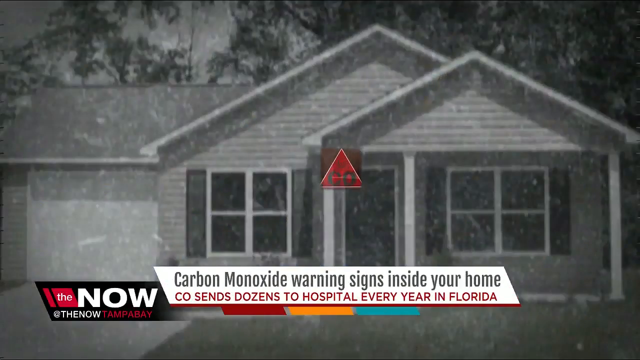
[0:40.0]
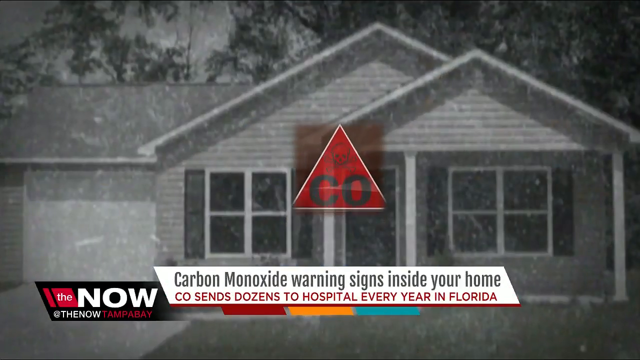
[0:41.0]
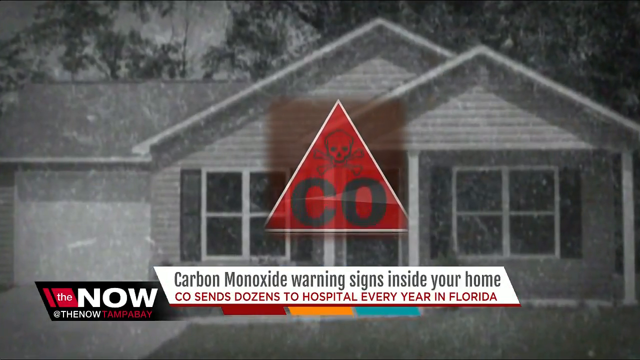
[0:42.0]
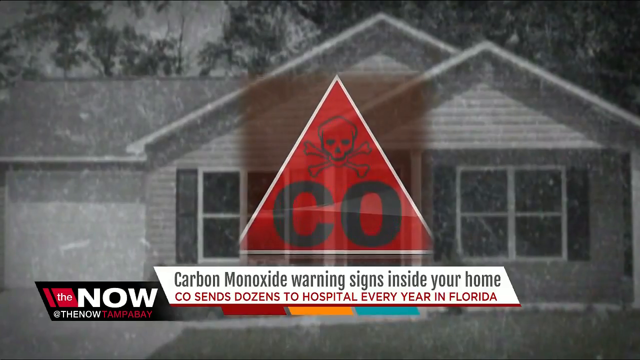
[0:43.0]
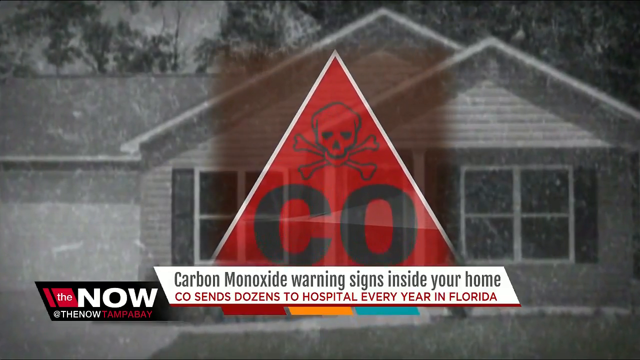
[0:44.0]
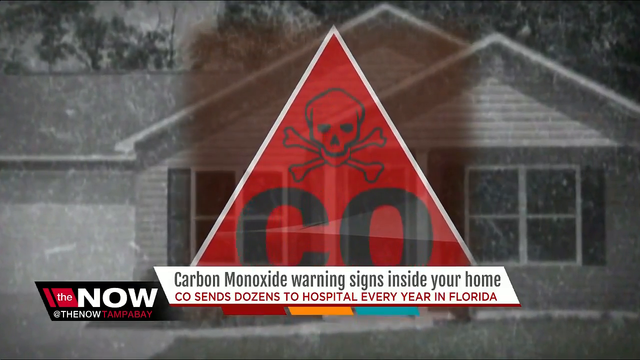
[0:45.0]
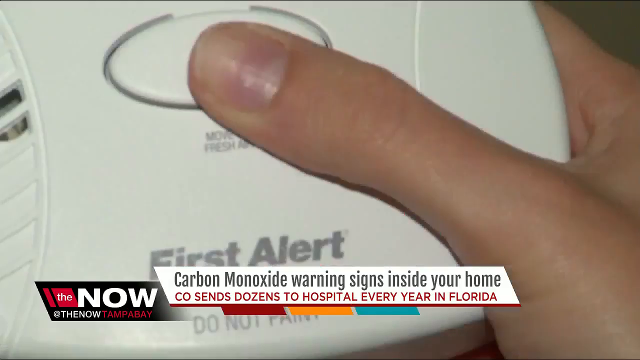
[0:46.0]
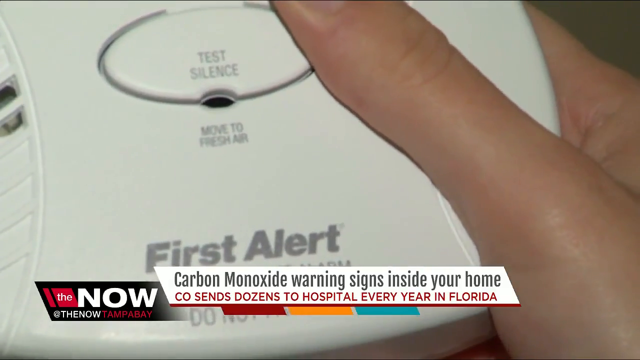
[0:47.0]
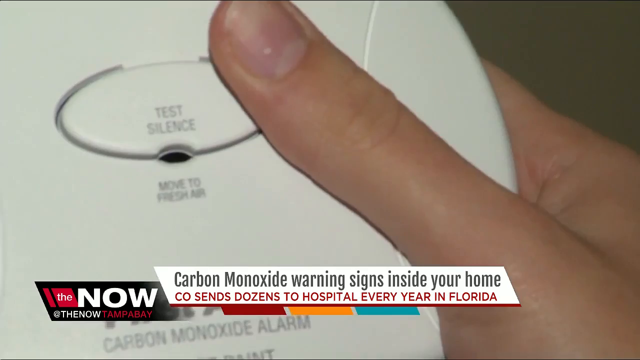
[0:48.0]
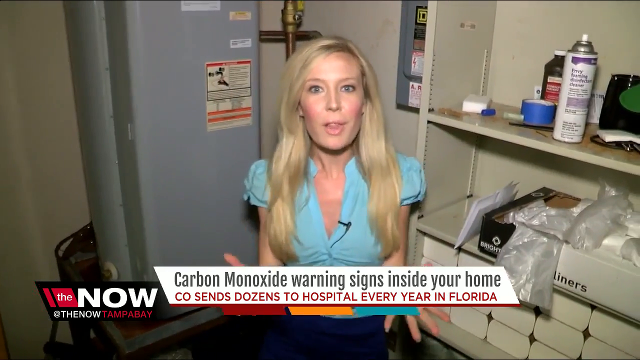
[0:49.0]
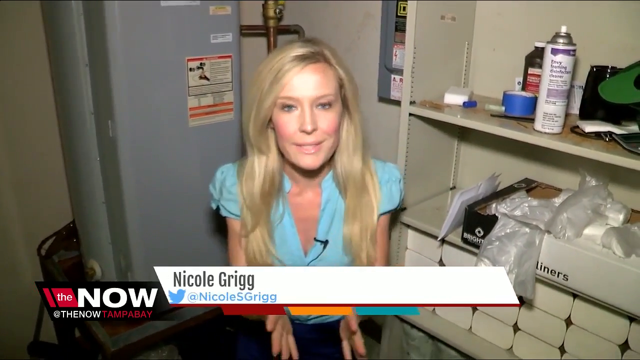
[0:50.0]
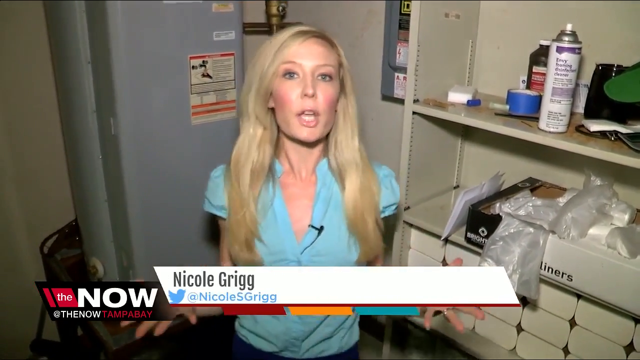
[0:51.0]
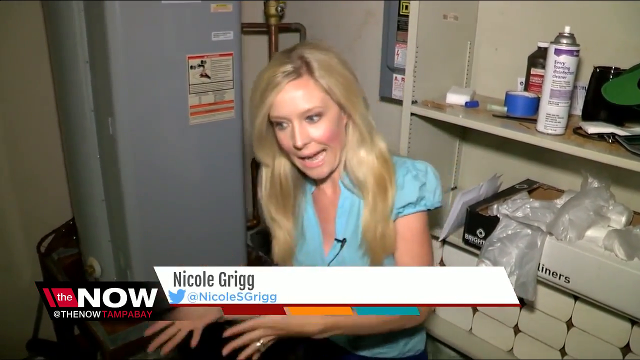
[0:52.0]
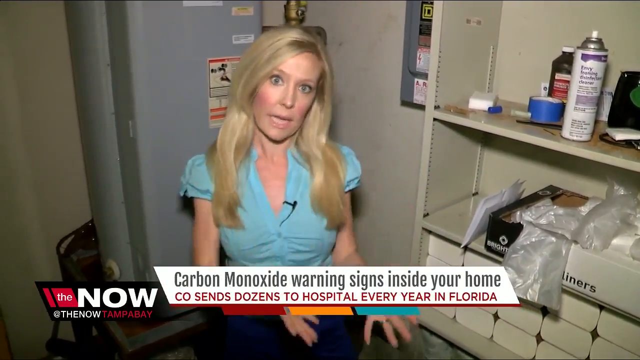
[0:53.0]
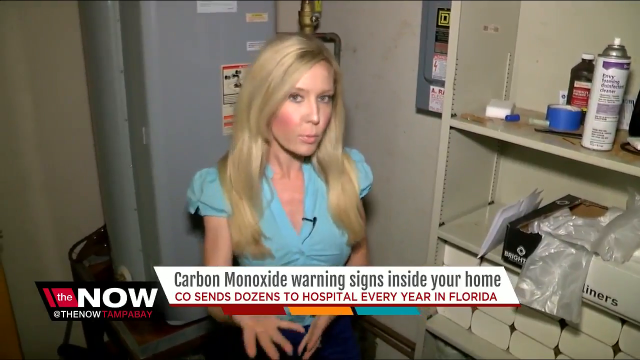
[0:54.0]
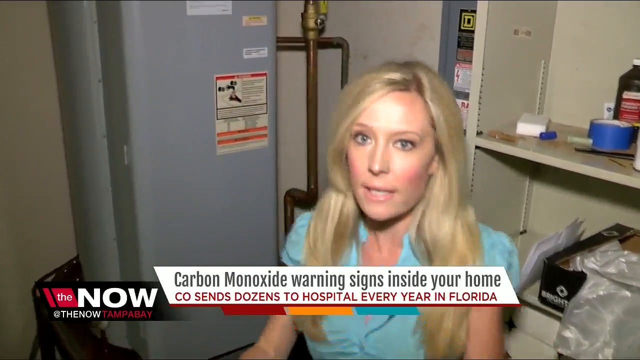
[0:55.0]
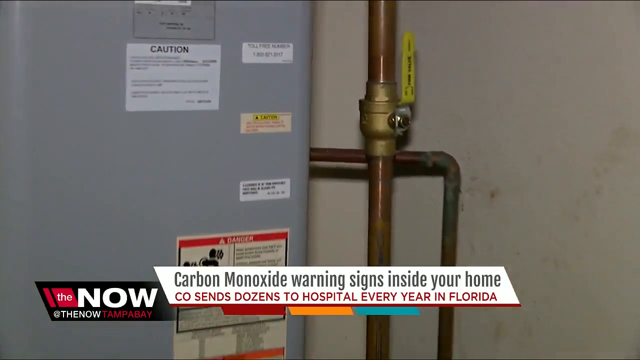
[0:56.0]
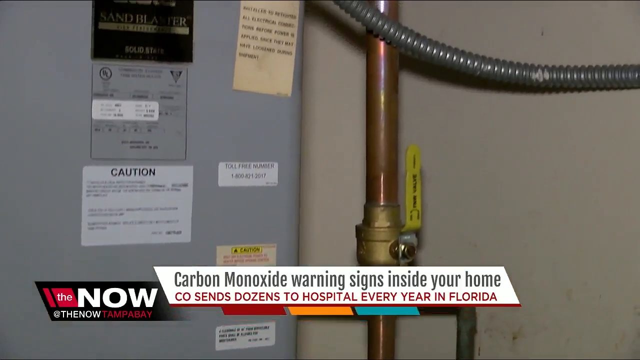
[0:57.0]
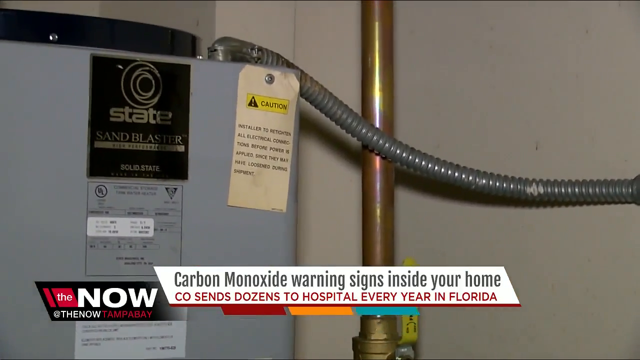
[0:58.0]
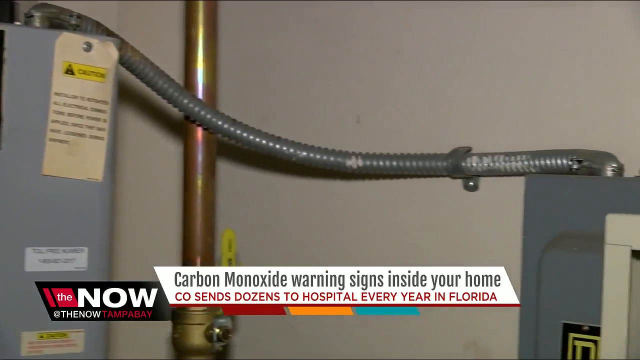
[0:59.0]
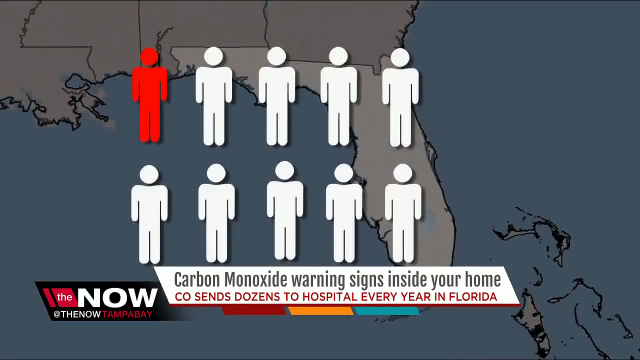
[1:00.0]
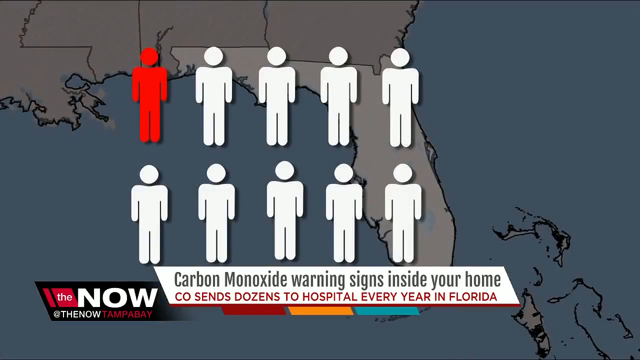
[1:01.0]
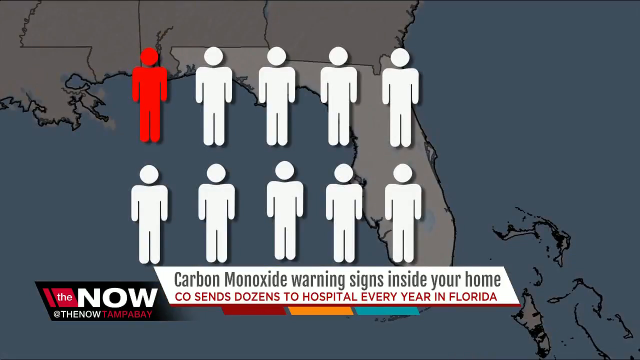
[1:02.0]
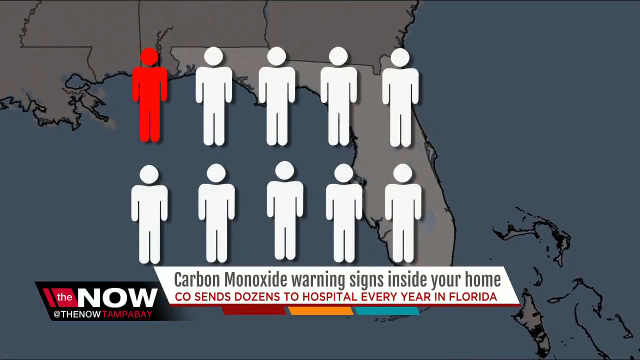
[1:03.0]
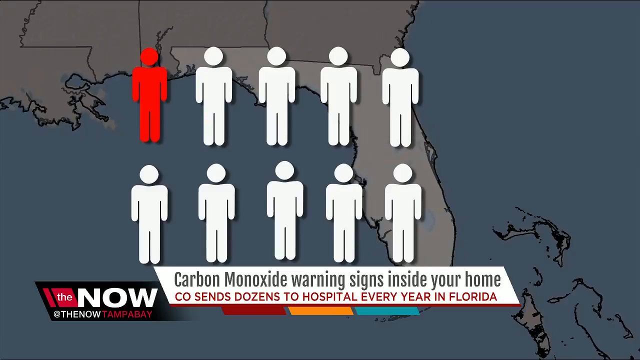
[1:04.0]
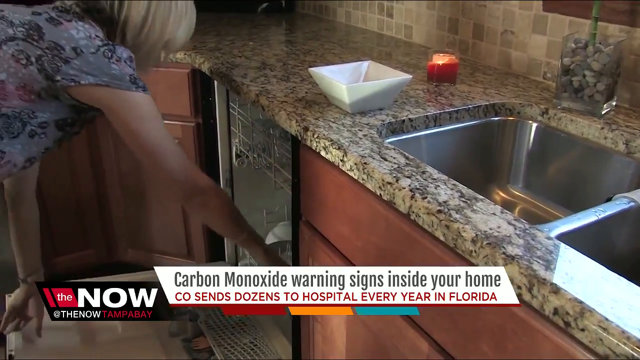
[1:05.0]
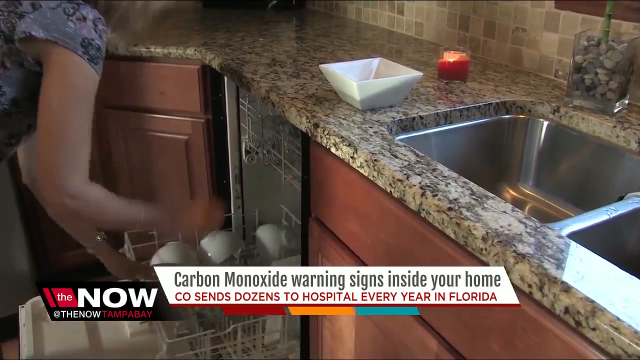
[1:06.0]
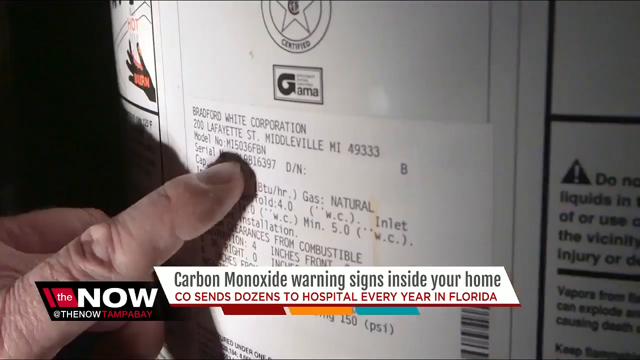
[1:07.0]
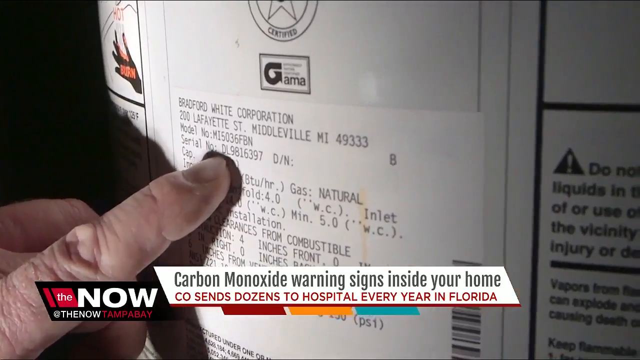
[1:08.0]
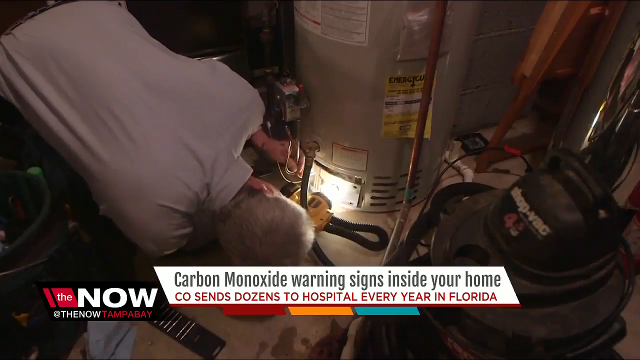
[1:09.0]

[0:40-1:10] A gray image of a house with windows in the front and a triangular roof is shown. In the middle is a triangle with red inside, a skull and crossbones at the top, and dark black lettering reading "CO". A white banner underneath reads in black lettering "carbon monoxide warning signs inside your home", with red lettering below reading "CO sends dozens to hospital every year in Florida". On the left is the black banner with a red box holding the white word "the", "now" in white beside it, "at the now" below, and "Tampa Bay" in red. The image in the center of the triangle gets larger. Next, a white person's hand on the right side holds a white device with black lettering at the top reading "test silence" on a button, then "move to fresh air" below, and "first alert" and "carbon monoxide alarm" below that. The next scene shows a white woman with blonde hair in a teal sleeveless top. Behind her on the left is a grayish tank, and to her right are beige metal shelves holding a white and purple spray can and a roll of blue tape; a gray fuse box is just behind her. The white banner beneath her has changed and now reads in dark gray lettering "Nicole Gregg", with the X logo under the blue bird and "at Nicole S. Gregg" in blue lettering. On her right side are two boxes: one with white lettering reading "bright", and a white box beside it with plastic bags strewn over it and black letters underneath reading "the liners". The camera zooms in on the lettering. A gray ribbed pipe runs across from a gray metal box, and a brownish-gold pipe goes upwards. There is a caution tag: a teal square with yellow in the middle and a black triangle with what seems to be a white exclamation mark, with black lettering beside it reading "caution" and black letters below reading "installer to retighten all electrical connections before power is applied, since they may have loosened during shipment". Beside it is a black box sign with silver letters and a silver circle above, with a white-silver square reading "high performance" and "solid state" underneath. The camera pans over. The next image shows a gray screen with cartoon drawings of people, five in the top row and five at the bottom; the very first person at the top left is red and everyone else is white. There is a gray outline of Florida, parts of Missouri, Louisiana, South Carolina and a bit of Texas, with the Gulf and a waterway to the left and the Atlantic Ocean to the right.